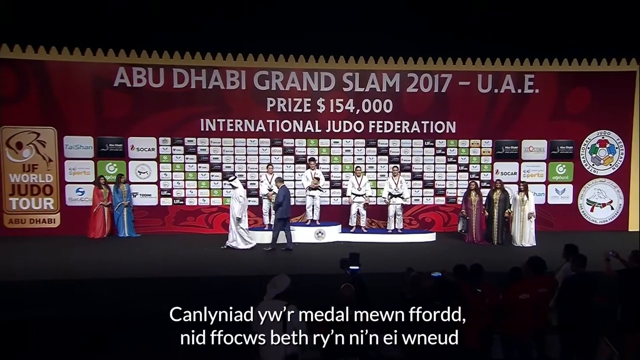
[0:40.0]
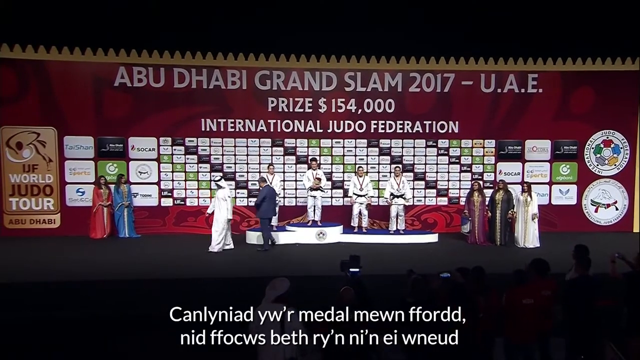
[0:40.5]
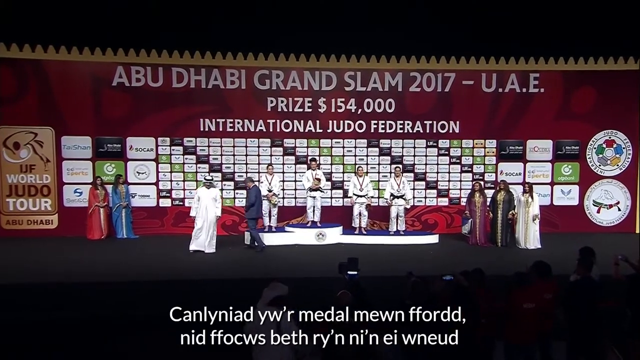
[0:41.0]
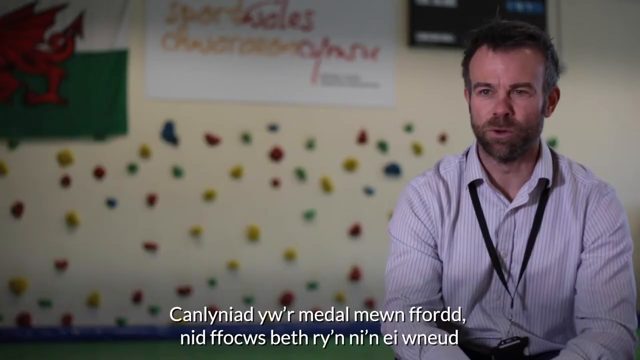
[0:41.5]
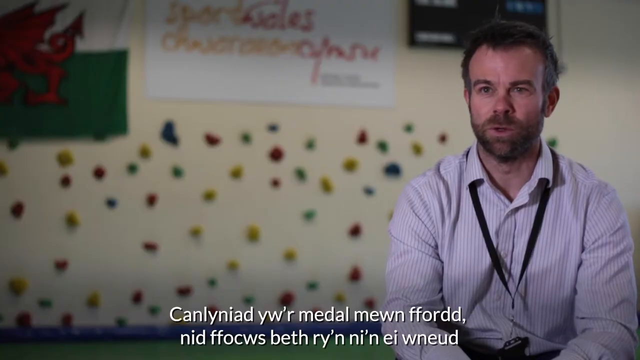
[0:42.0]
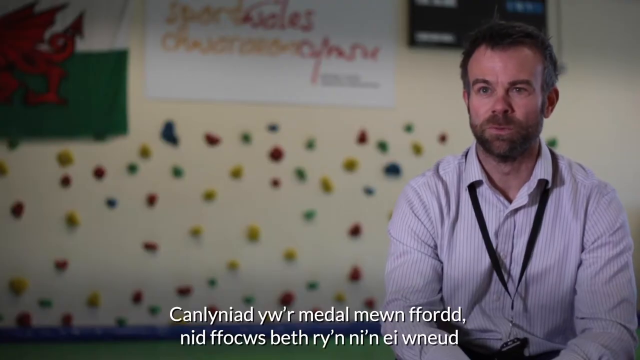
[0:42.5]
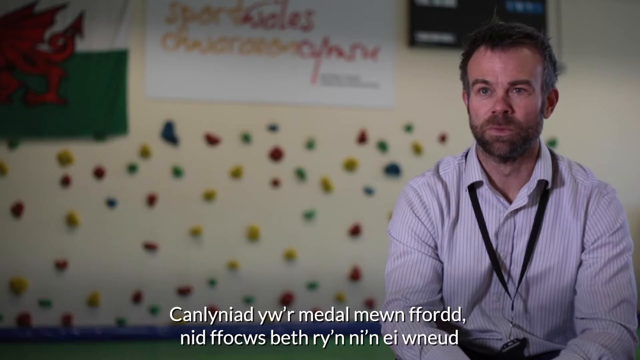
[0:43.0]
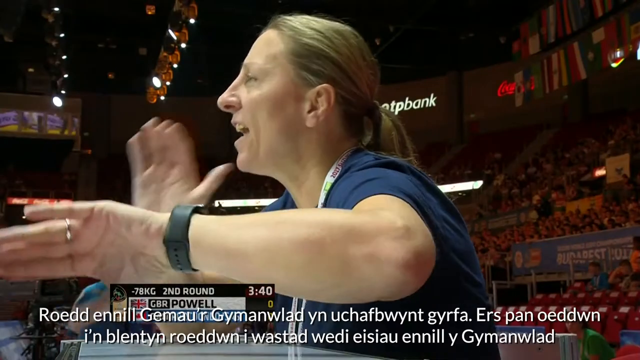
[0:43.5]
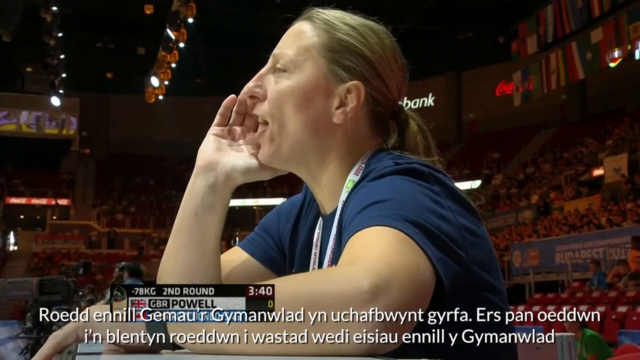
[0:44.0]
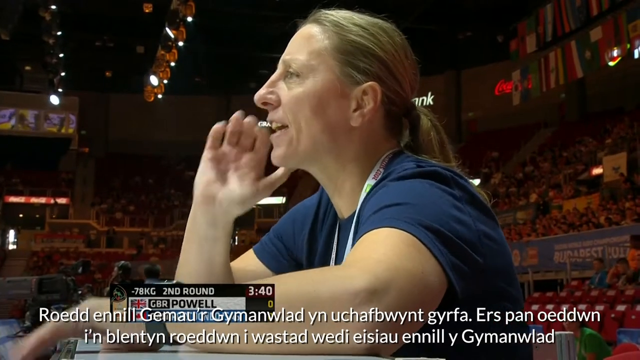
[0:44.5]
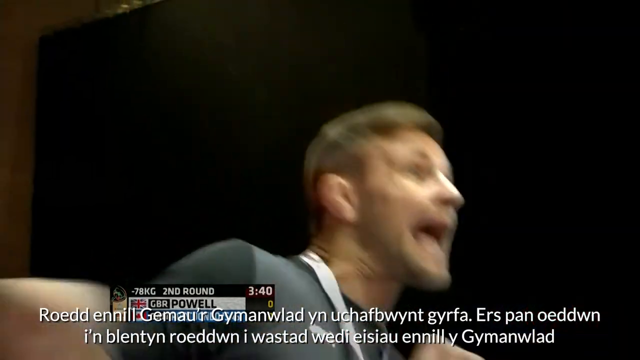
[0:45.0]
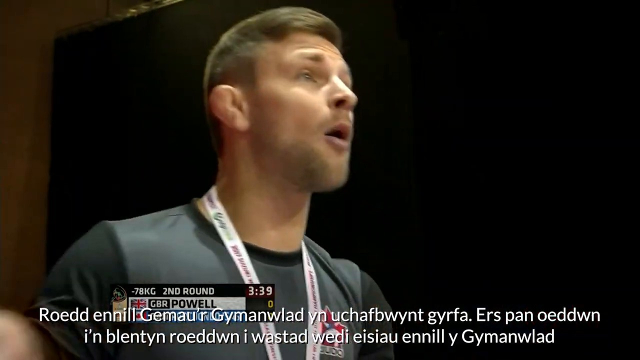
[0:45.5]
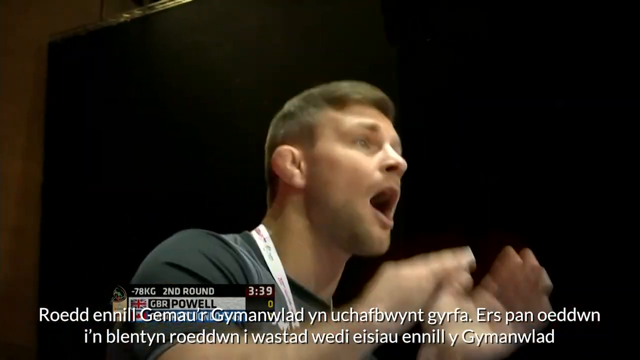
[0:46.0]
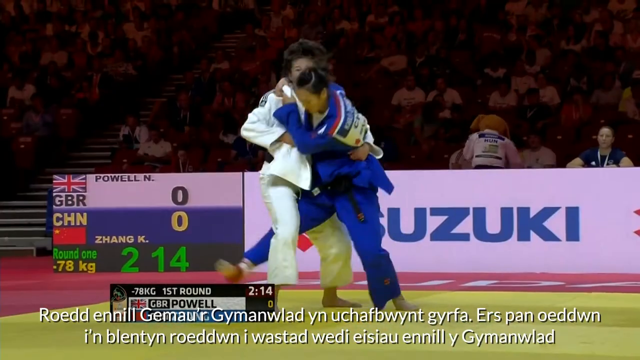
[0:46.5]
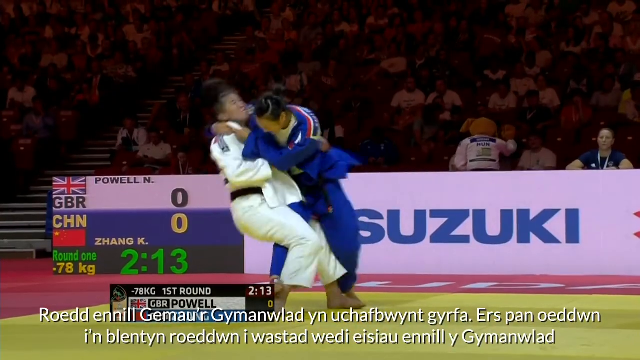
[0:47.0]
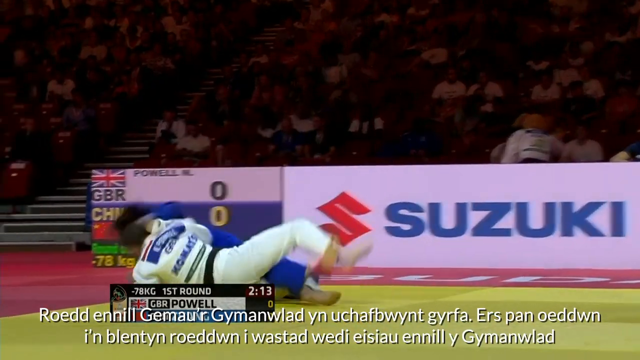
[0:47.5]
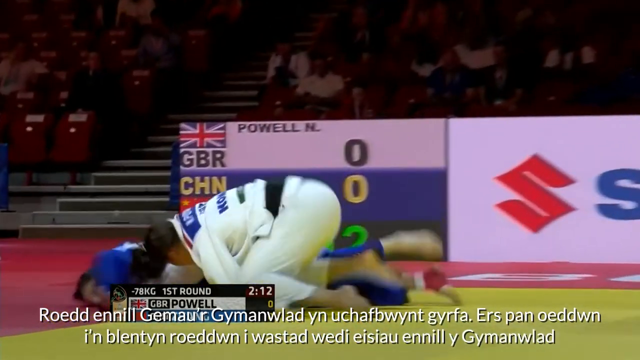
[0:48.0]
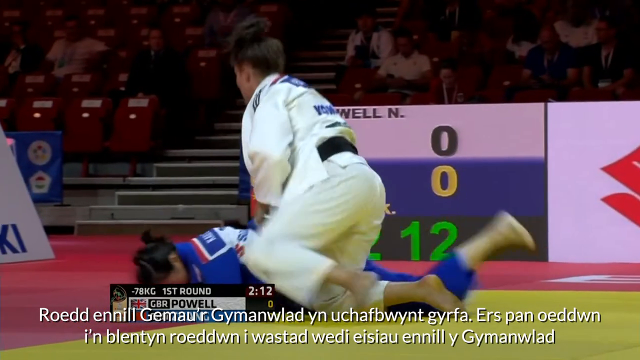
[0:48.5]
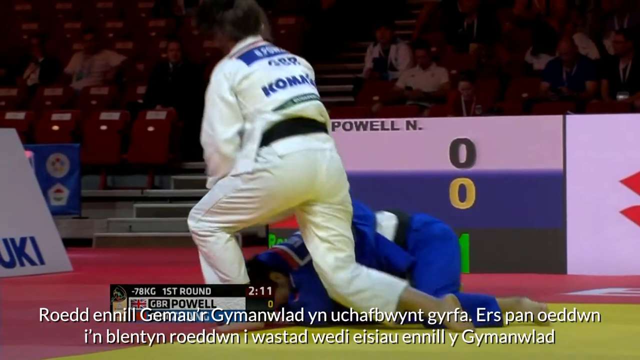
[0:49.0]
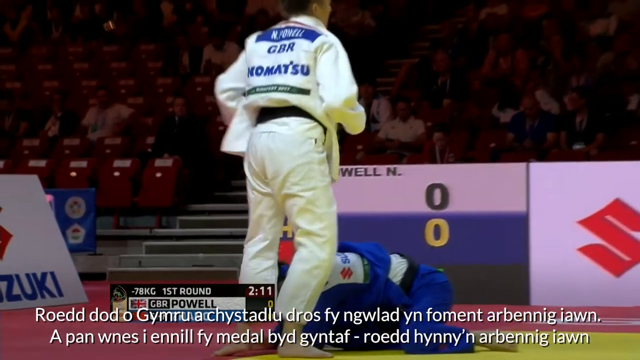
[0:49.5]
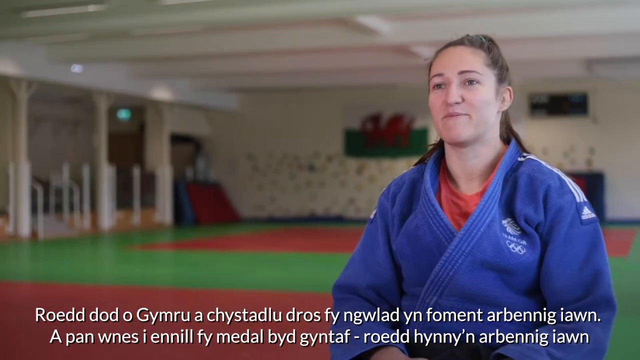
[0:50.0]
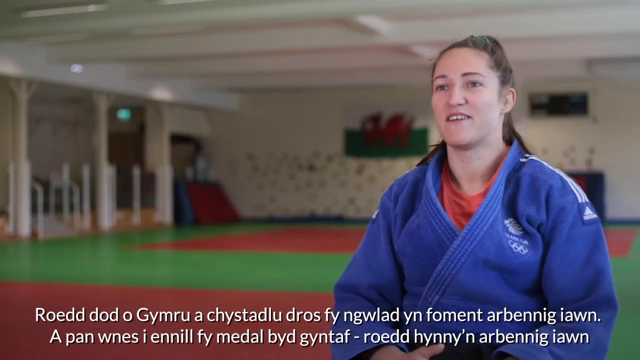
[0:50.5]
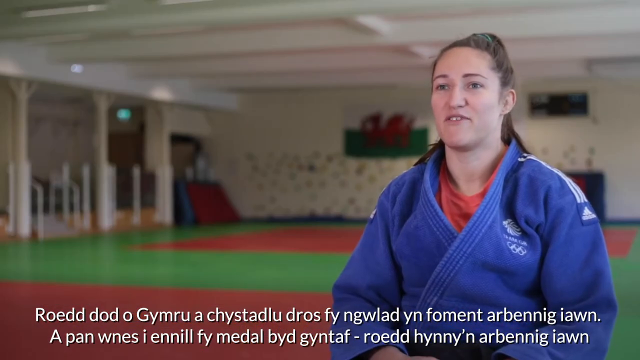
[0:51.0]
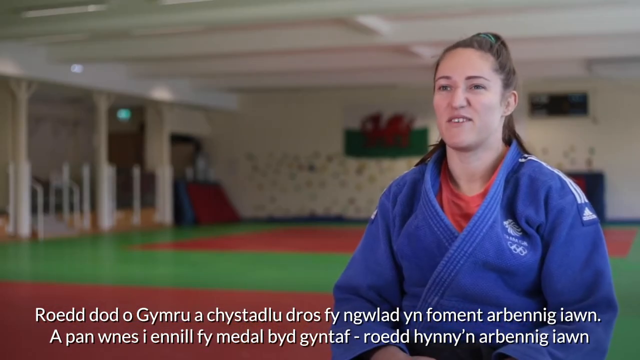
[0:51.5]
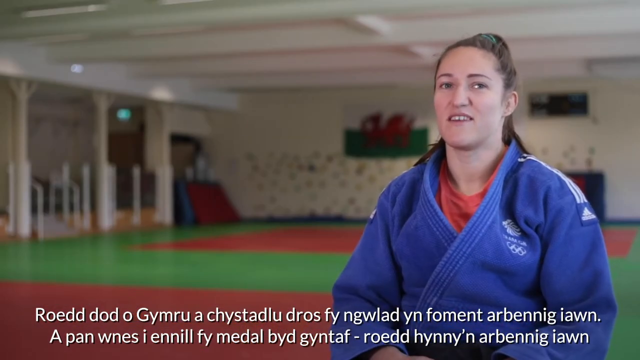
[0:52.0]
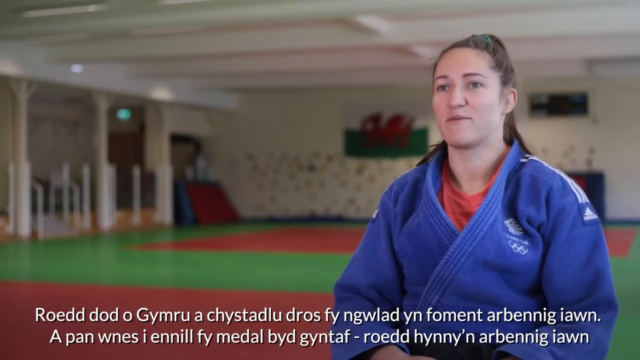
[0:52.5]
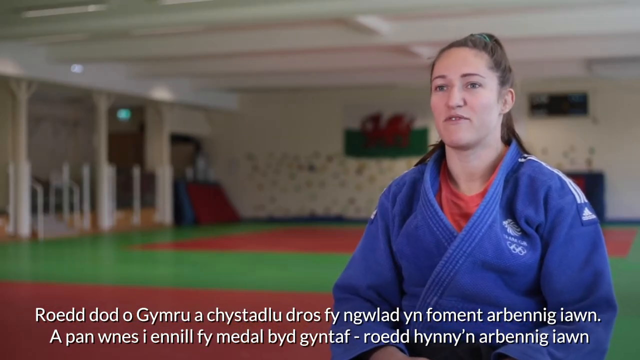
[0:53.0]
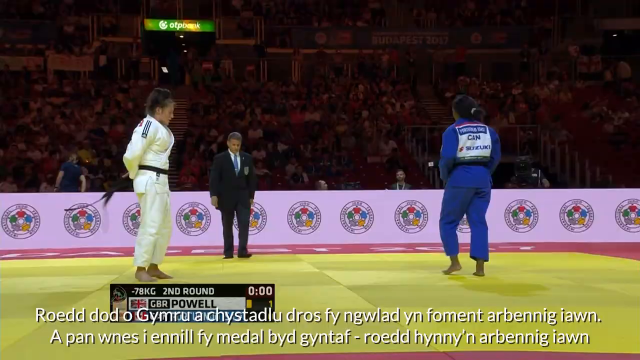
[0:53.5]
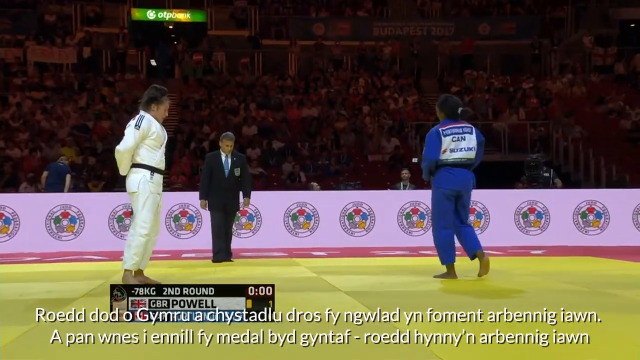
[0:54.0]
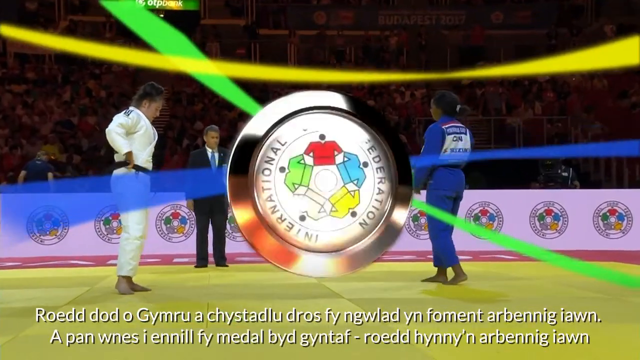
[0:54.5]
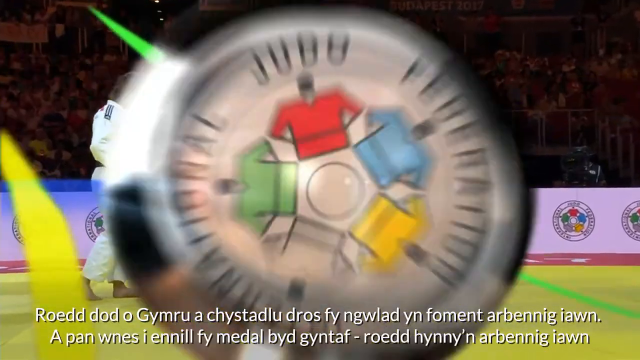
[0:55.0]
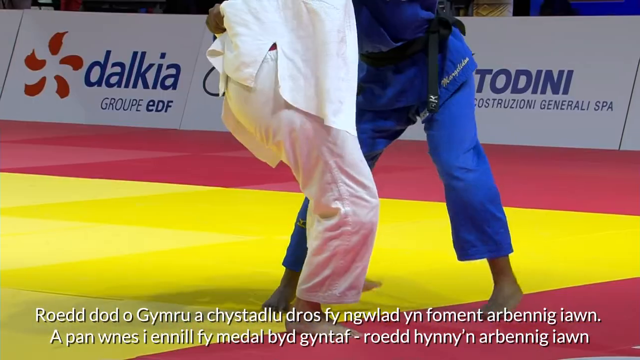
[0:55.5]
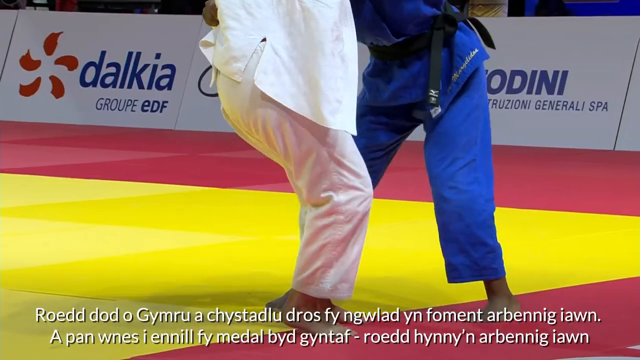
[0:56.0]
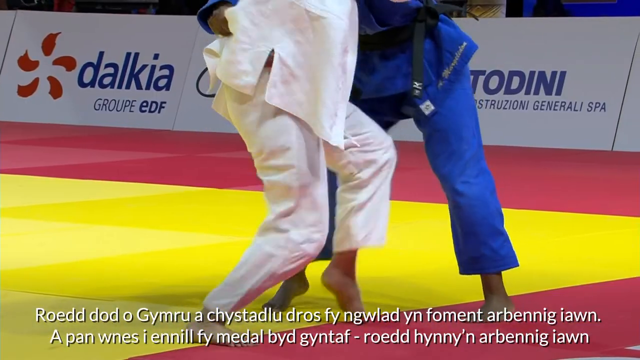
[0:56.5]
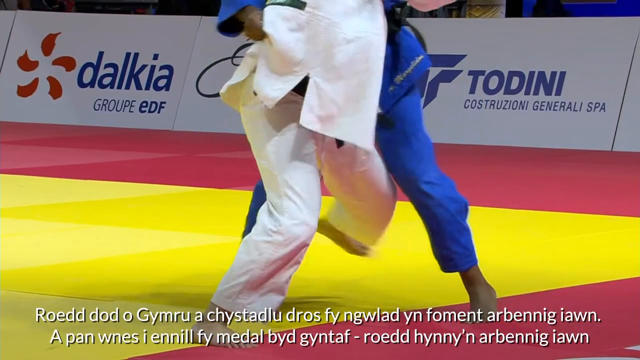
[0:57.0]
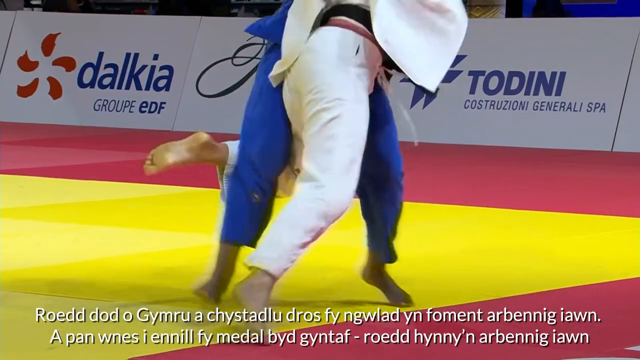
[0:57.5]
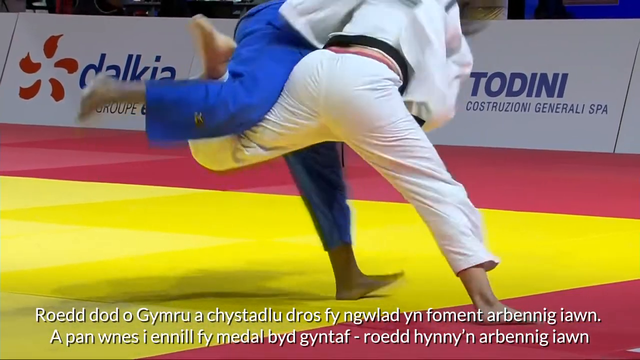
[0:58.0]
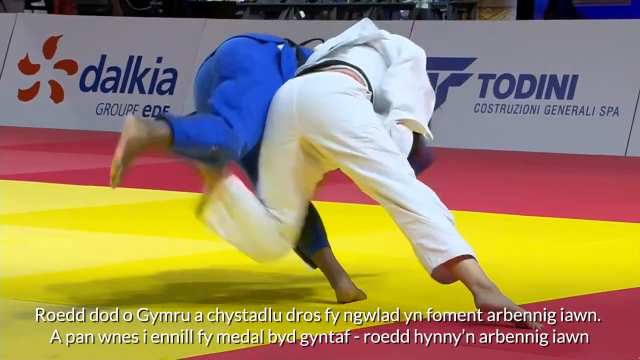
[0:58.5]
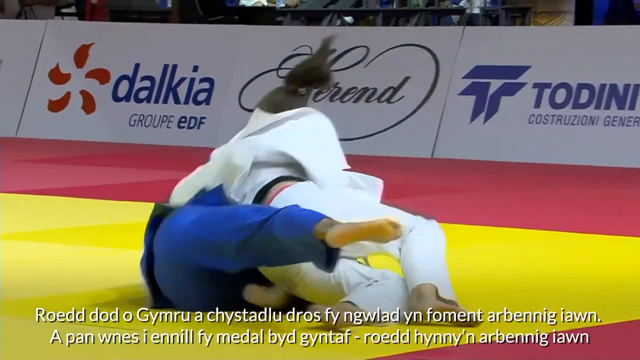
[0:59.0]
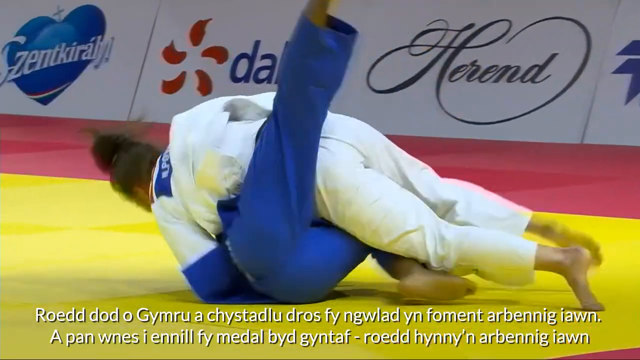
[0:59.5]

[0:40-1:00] At the Abu Dhabi Grand Slam of 2017, a number of judo players compete against each other, and the players also talk to the audience. The prize is shown as $154,000, and the International Judo Federation is shown supporting the event. "Abu Dhabi Grand Slam" appears in the background.